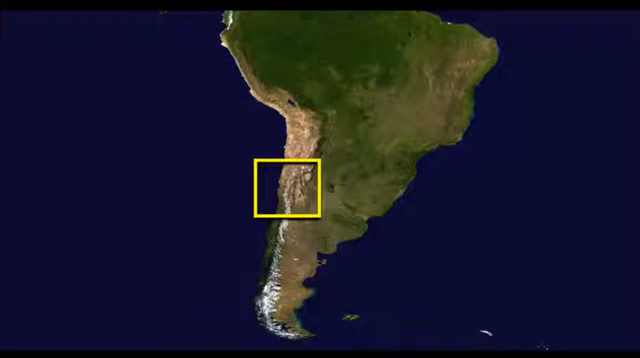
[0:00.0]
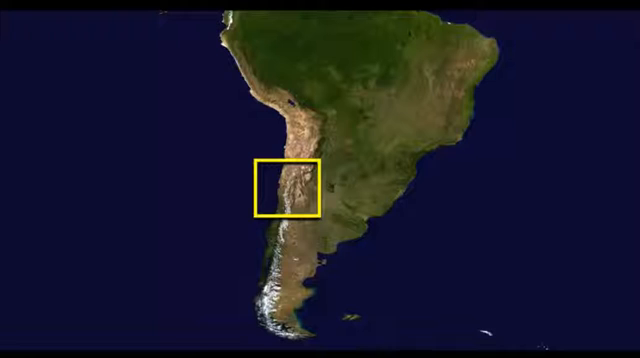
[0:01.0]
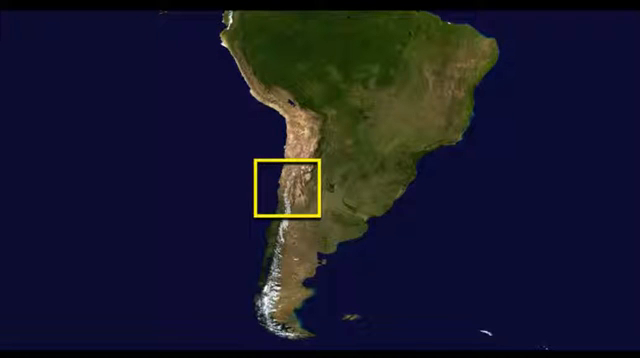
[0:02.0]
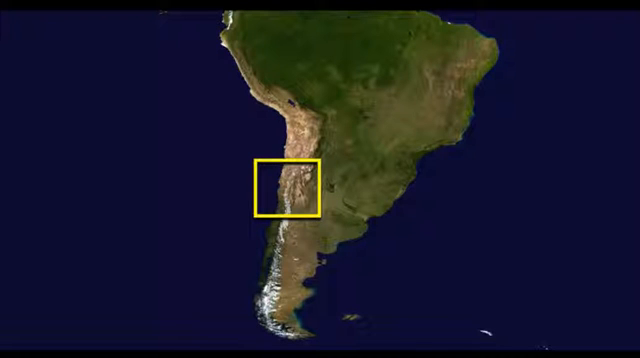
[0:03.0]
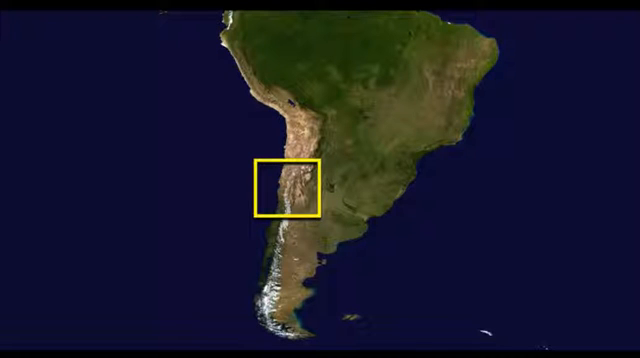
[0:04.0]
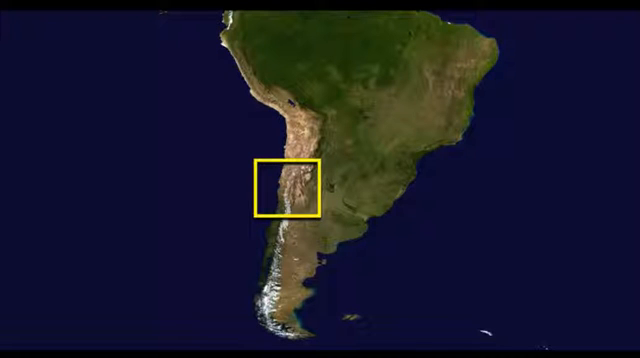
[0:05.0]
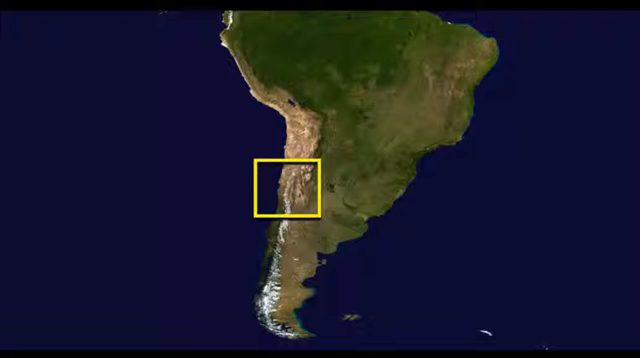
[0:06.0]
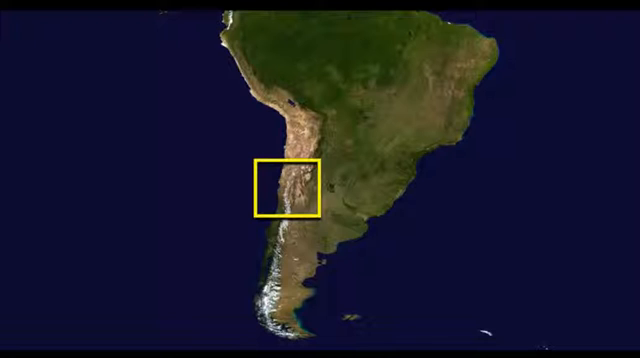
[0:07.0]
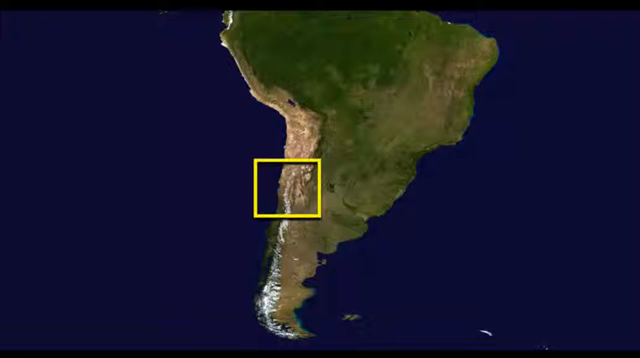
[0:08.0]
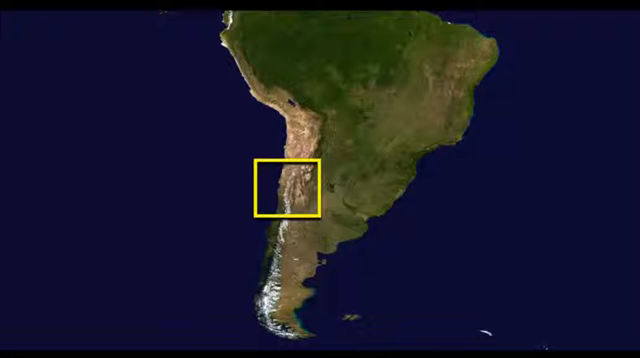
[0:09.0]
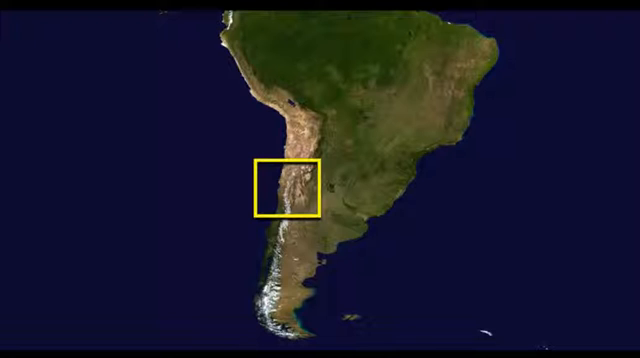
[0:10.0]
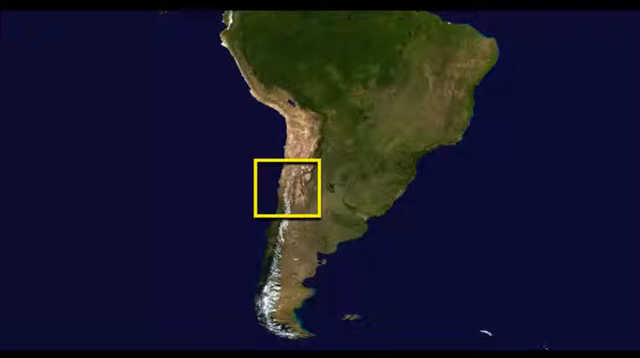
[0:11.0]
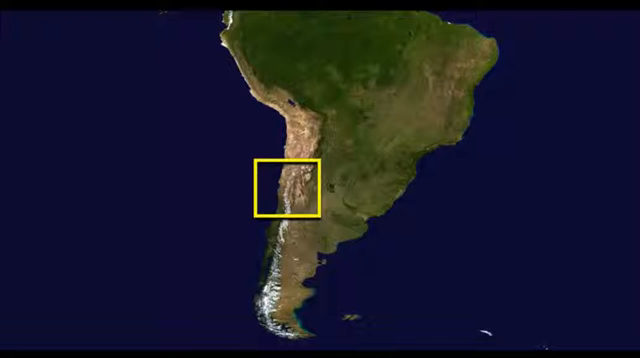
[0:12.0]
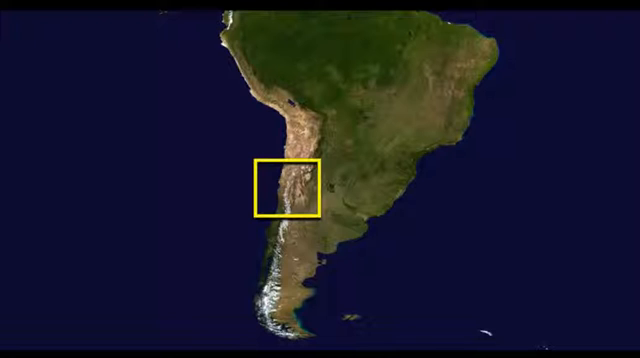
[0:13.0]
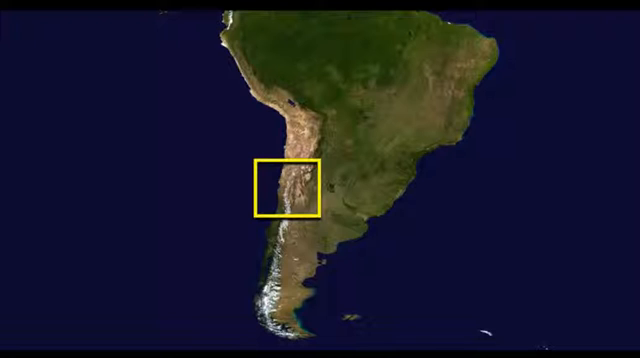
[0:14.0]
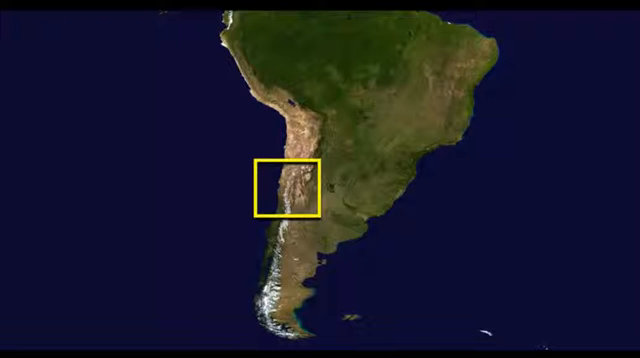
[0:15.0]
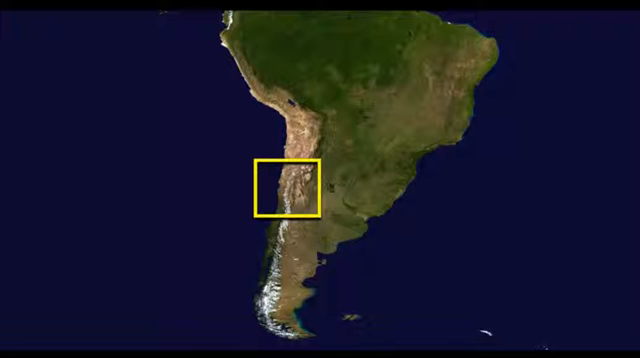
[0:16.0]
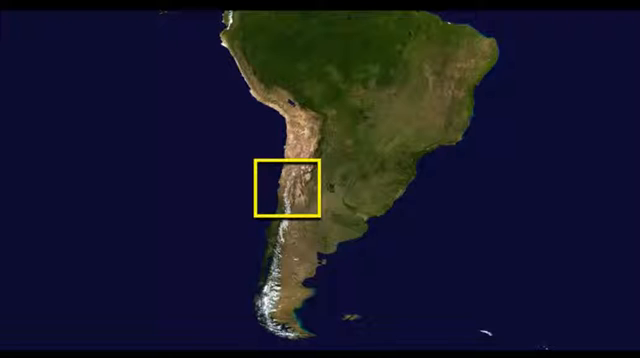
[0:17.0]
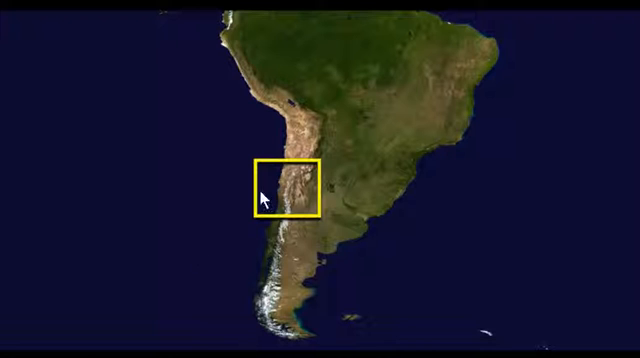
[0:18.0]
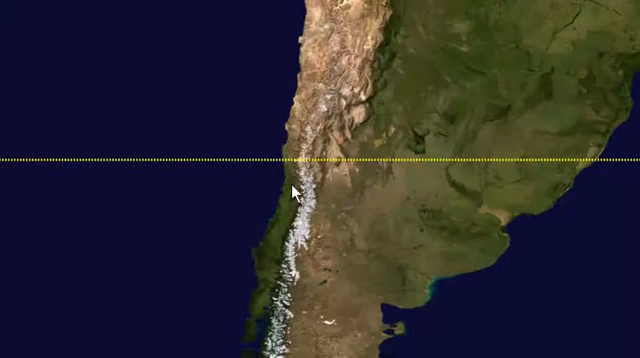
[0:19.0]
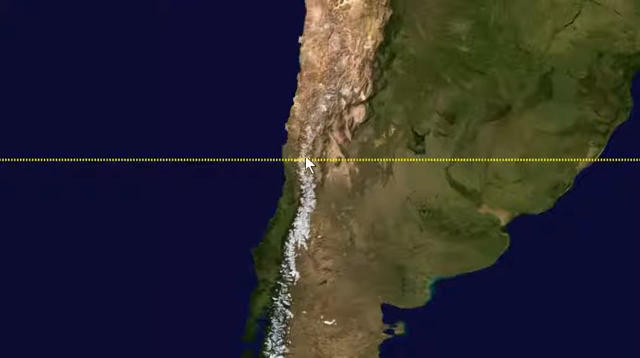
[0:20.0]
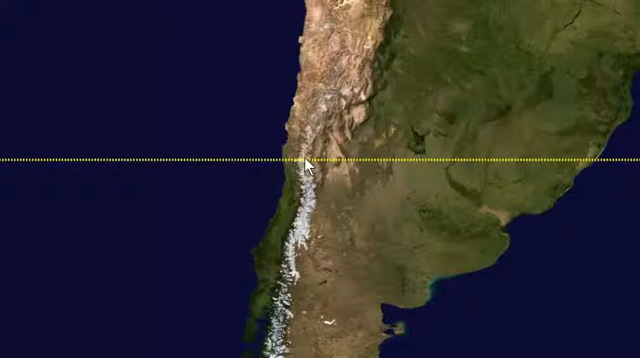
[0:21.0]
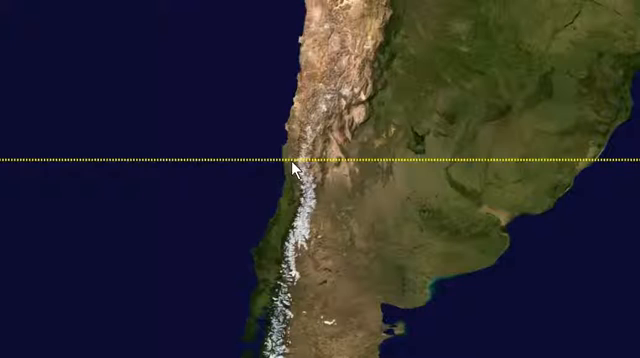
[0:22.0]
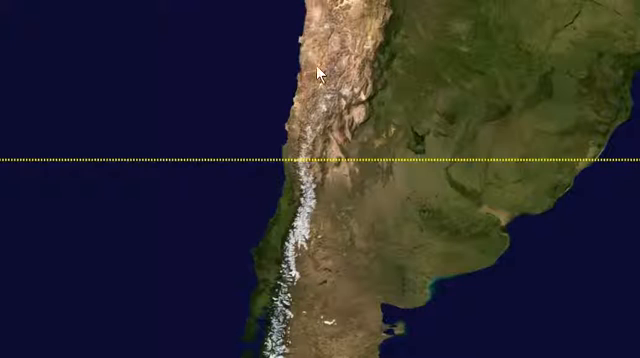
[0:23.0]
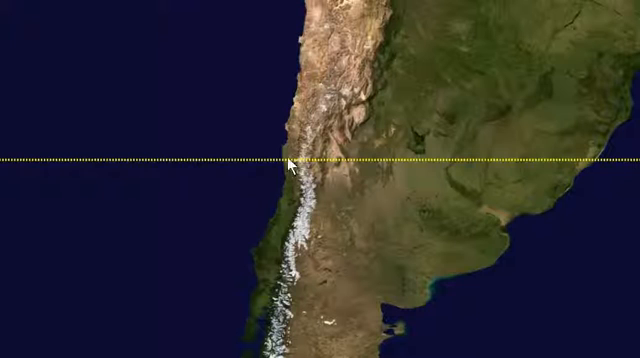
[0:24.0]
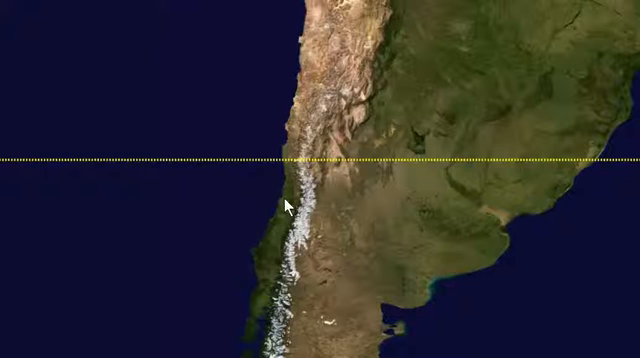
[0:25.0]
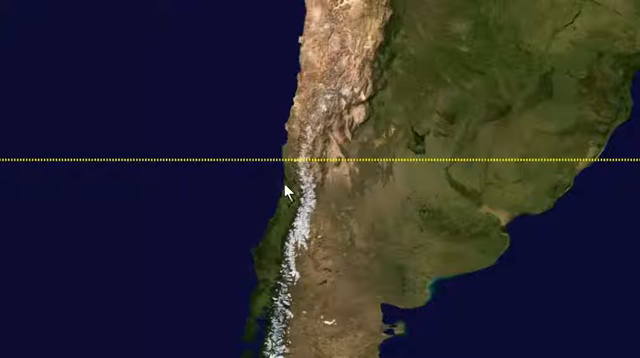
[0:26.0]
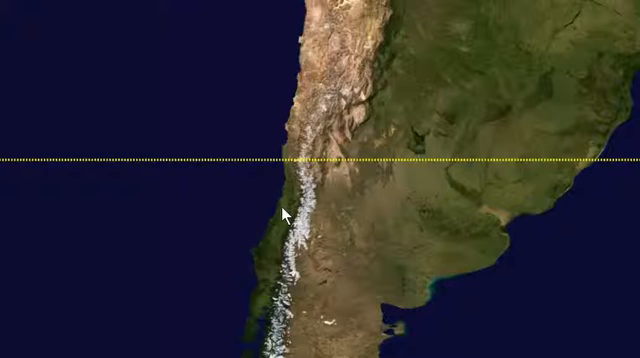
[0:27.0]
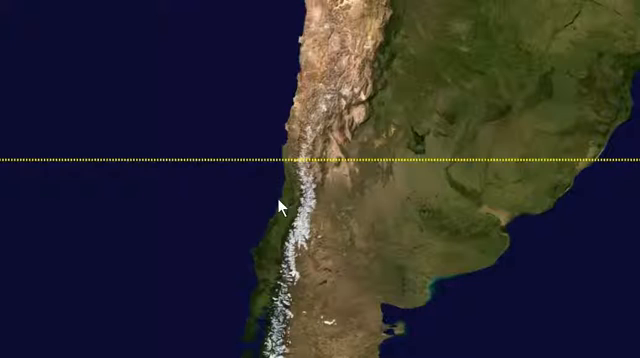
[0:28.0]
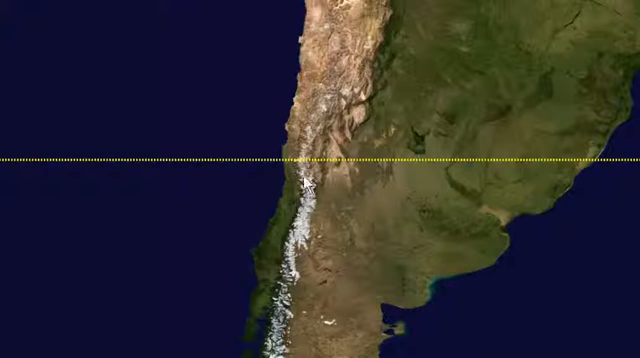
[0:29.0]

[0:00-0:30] A graphical illustration of a map is drawn against a dark black background, with a yellow square frame over the lower left corner of the landmass. This view holds for about 10 or more seconds. A mouse pointer then clicks on the map, and the map zooms in. A yellow dotted line appears, running horizontally across the middle of the screen from left to right, and the pointer hovers over it. The pointer then scrolls upward to a brownish, rough-looking area of the map that represents rocky terrain. Next it hovers below the dotted line over a greenish part of the map that looks like vegetation, continuing to hover and shift from left to right over this area.